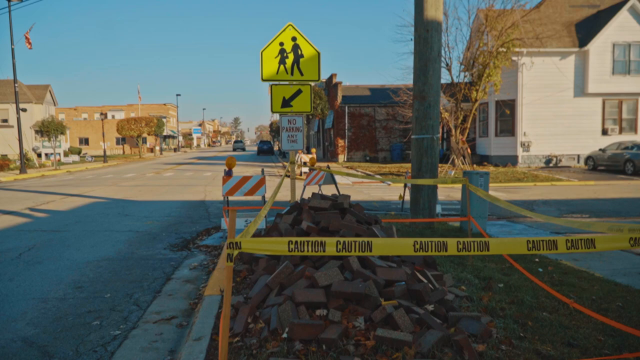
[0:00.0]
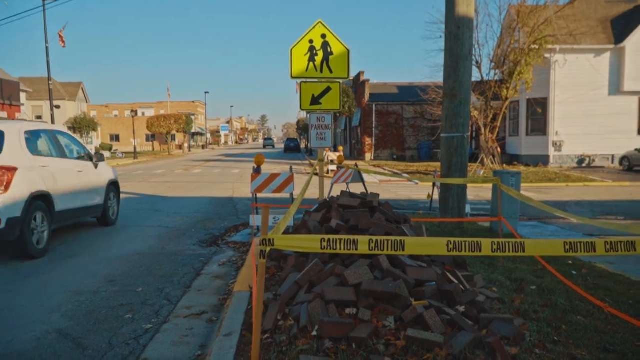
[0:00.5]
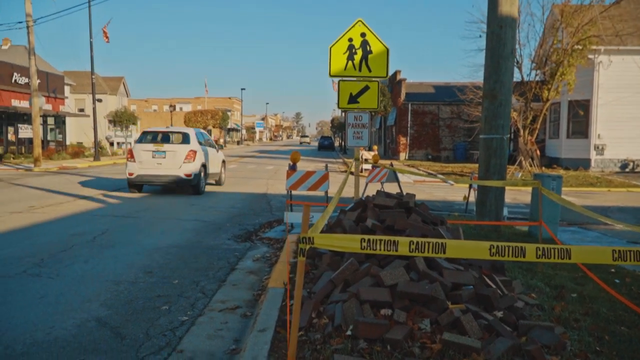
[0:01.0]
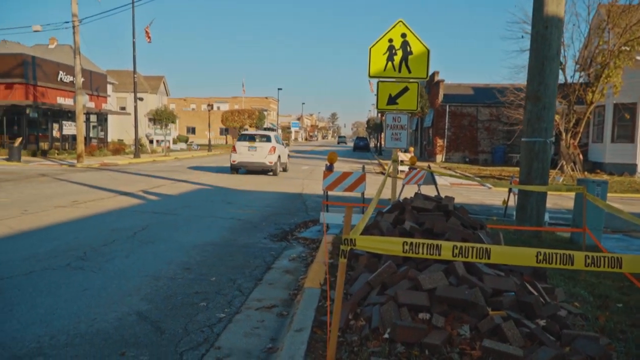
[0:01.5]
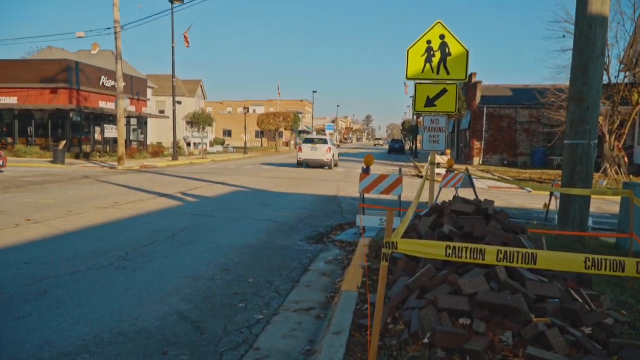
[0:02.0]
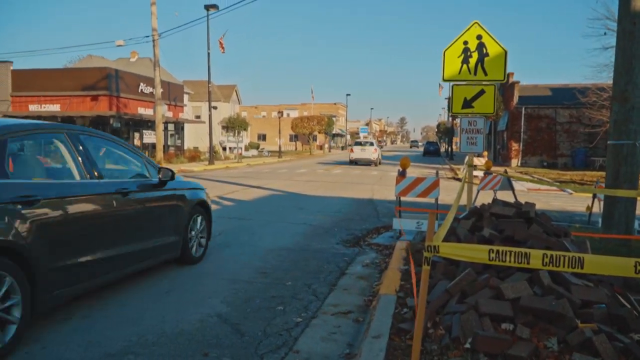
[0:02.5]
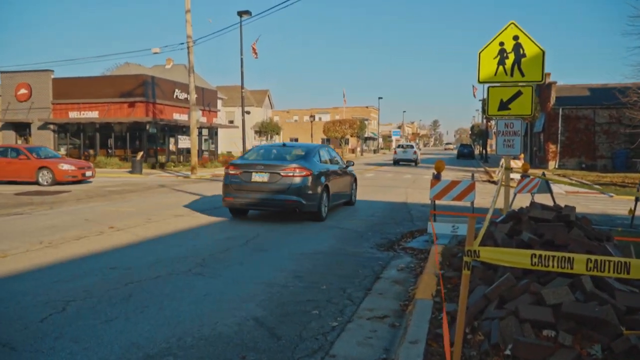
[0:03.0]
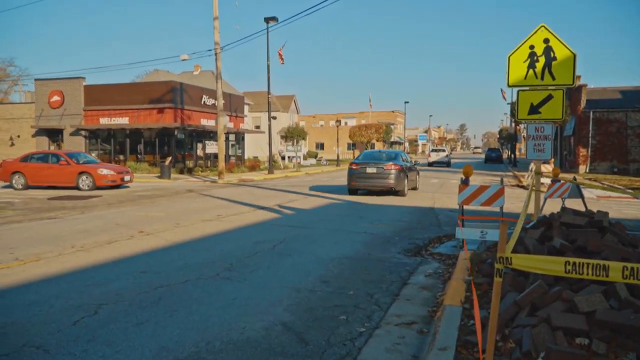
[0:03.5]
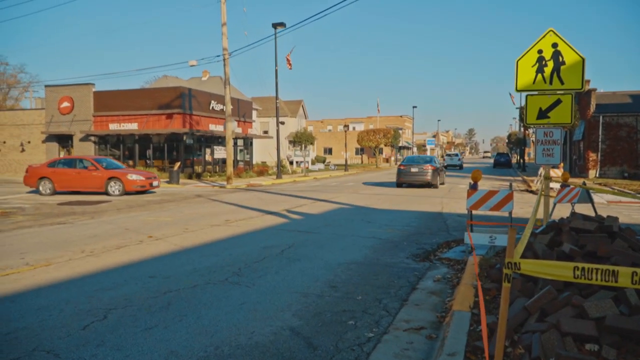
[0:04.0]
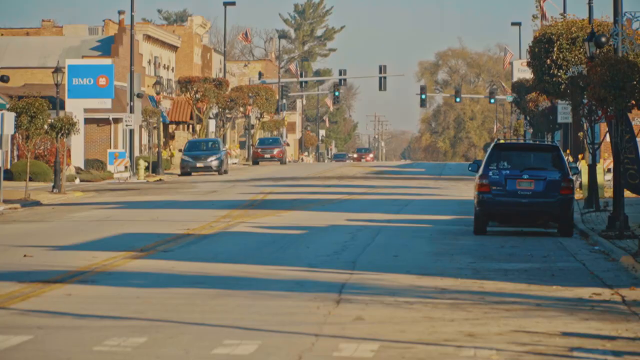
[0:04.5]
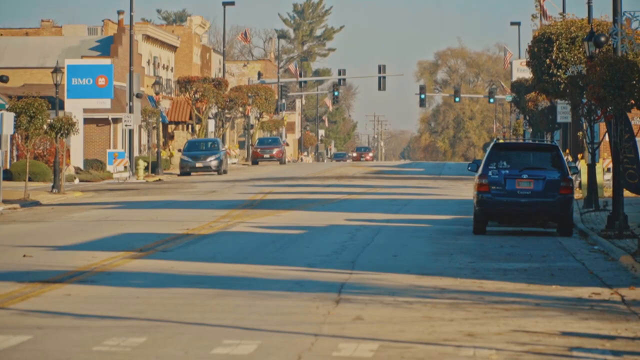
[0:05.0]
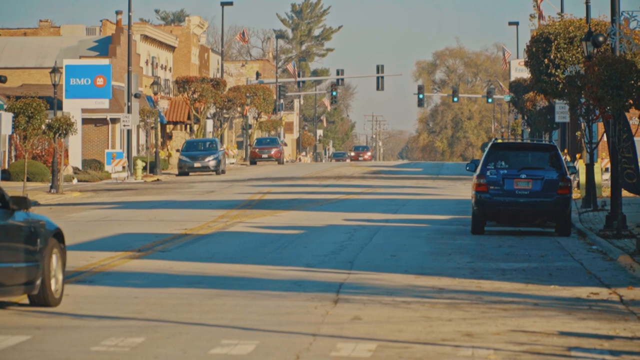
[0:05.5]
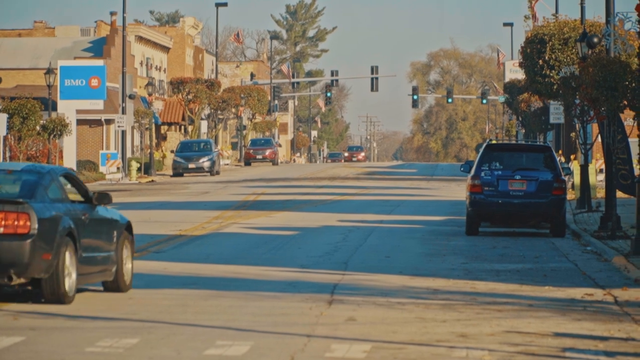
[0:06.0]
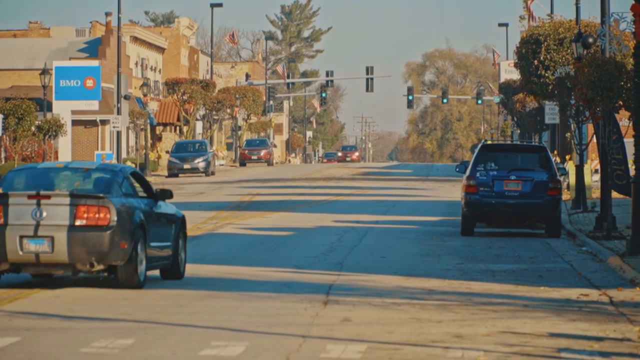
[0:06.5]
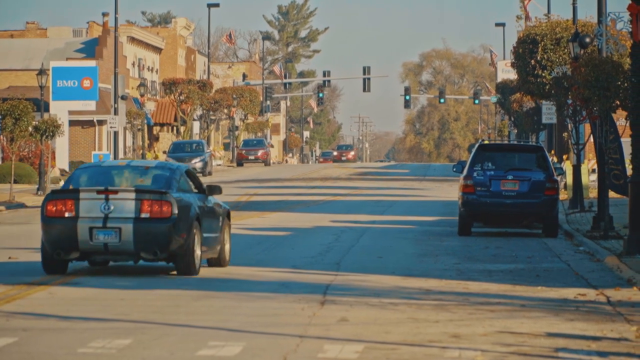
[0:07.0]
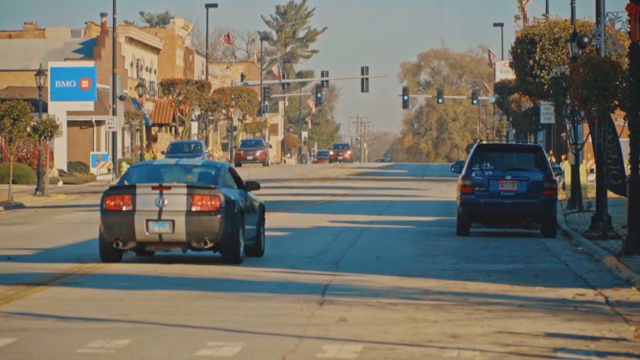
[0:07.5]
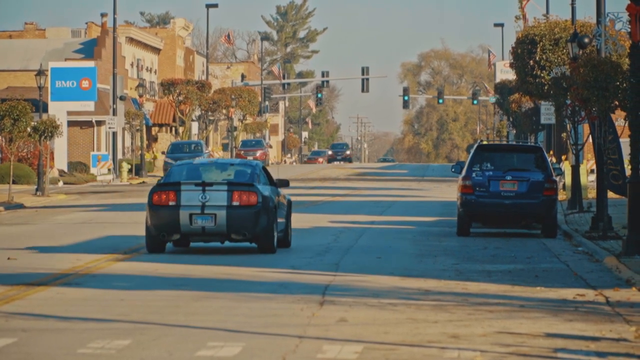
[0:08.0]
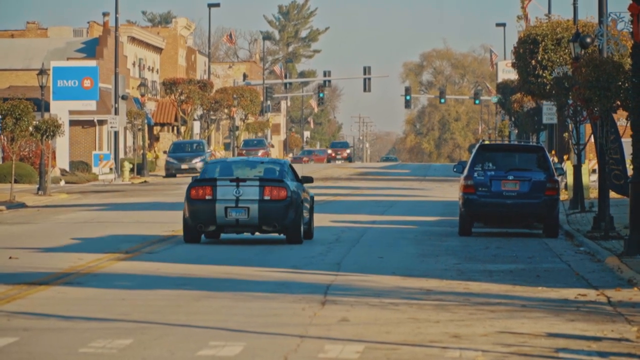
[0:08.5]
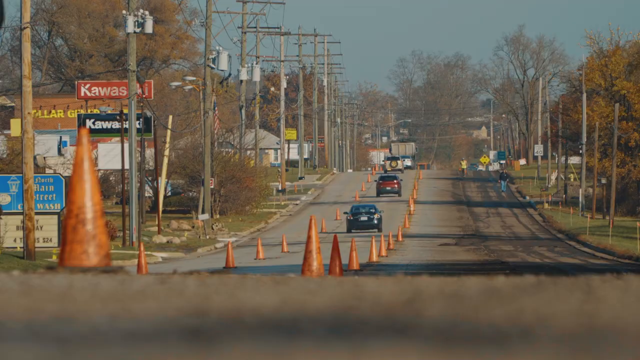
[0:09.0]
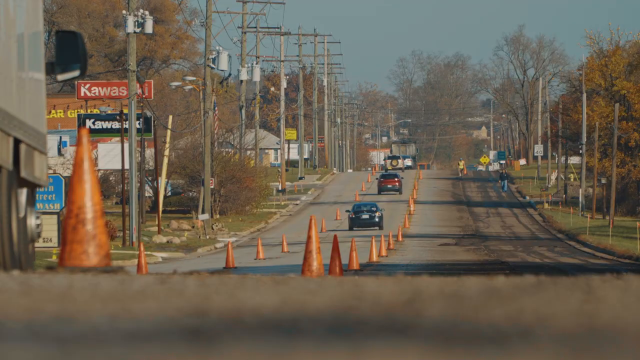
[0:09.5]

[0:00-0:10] A small road runs through a town; it looks to be a parkway of some sort, with houses and businesses on the left and right sides. A pedestrian crossing sign is visible with a no parking sign underneath it, and construction is taking place on the corner of the road. The main building with a visible sign is a Pizza Hut. It is daytime, with a clear blue sky and the sun shining down, and multiple streams of traffic can be seen. The footage spans a couple of different shots showing different parts of the road and town.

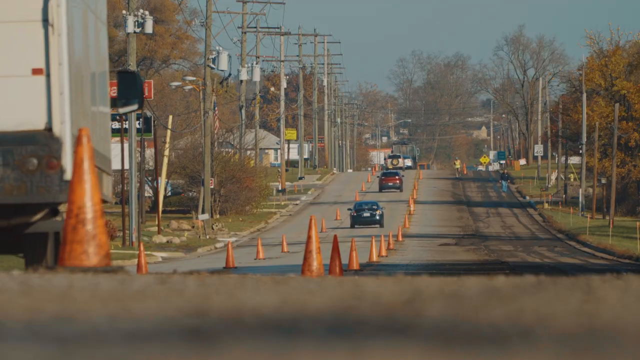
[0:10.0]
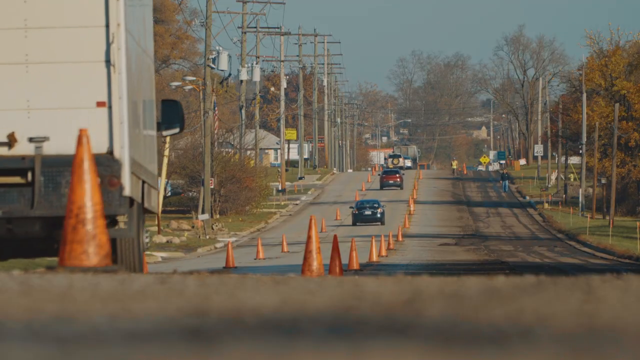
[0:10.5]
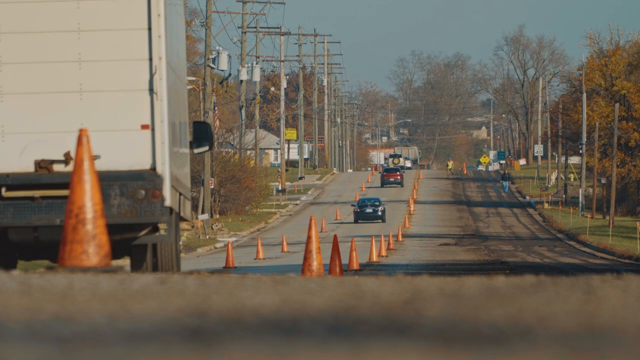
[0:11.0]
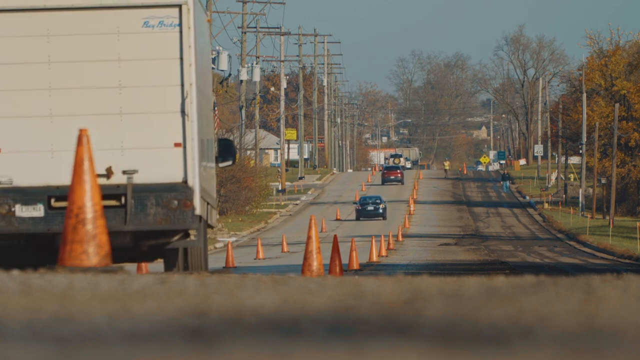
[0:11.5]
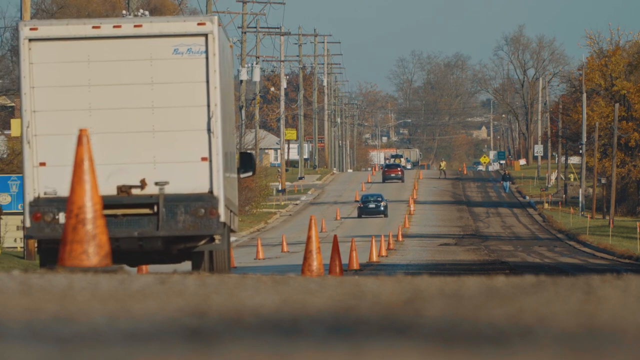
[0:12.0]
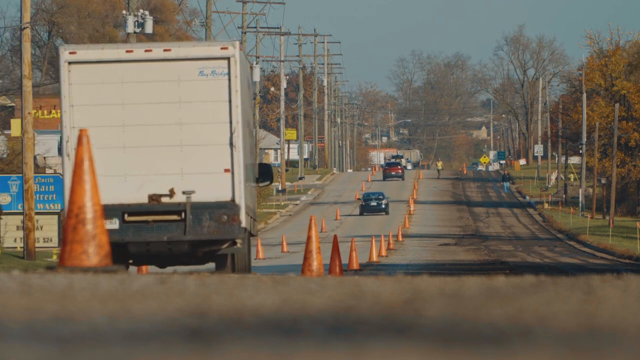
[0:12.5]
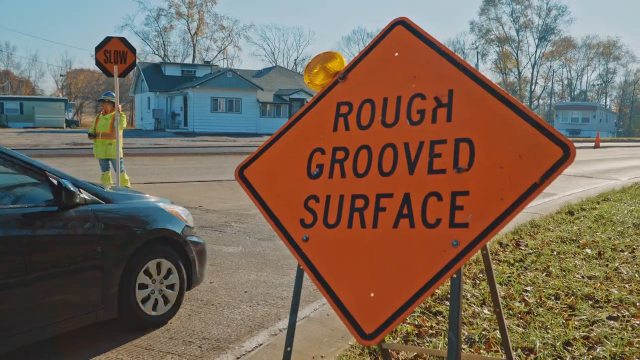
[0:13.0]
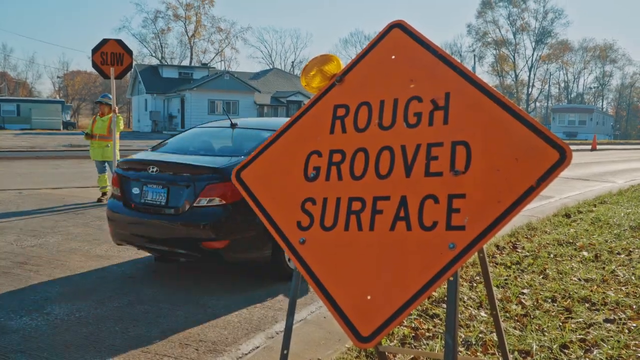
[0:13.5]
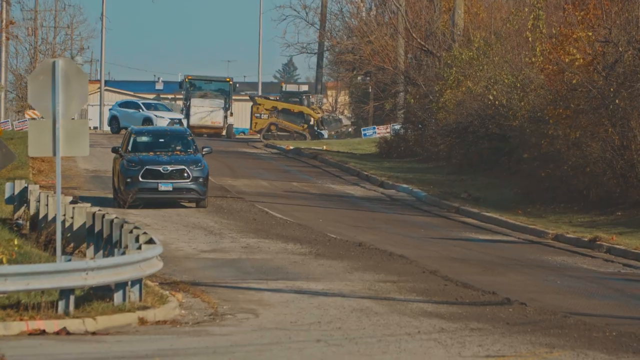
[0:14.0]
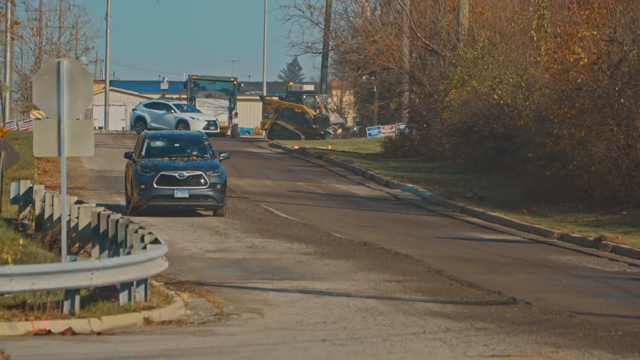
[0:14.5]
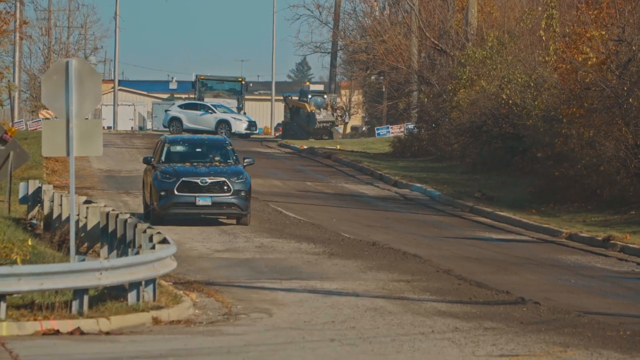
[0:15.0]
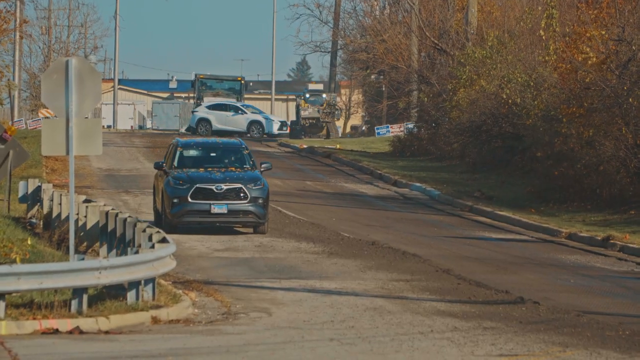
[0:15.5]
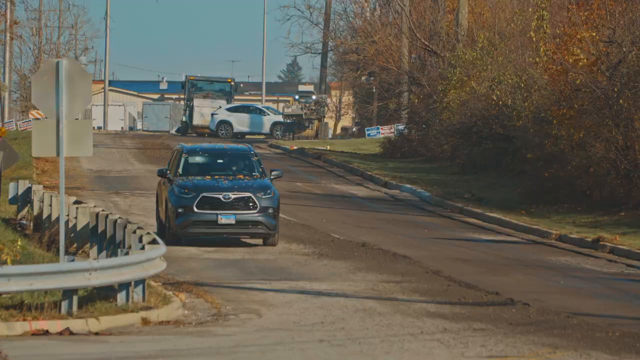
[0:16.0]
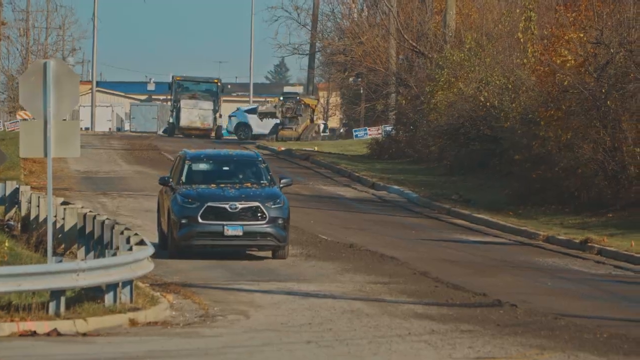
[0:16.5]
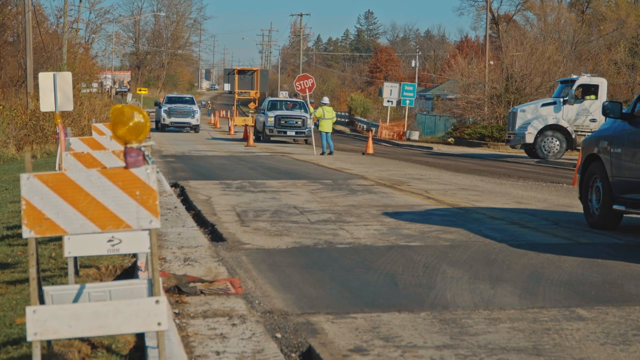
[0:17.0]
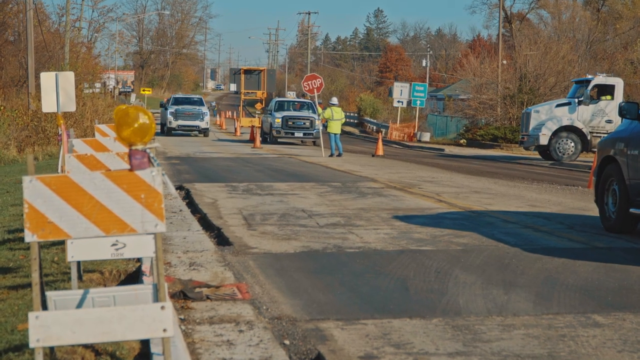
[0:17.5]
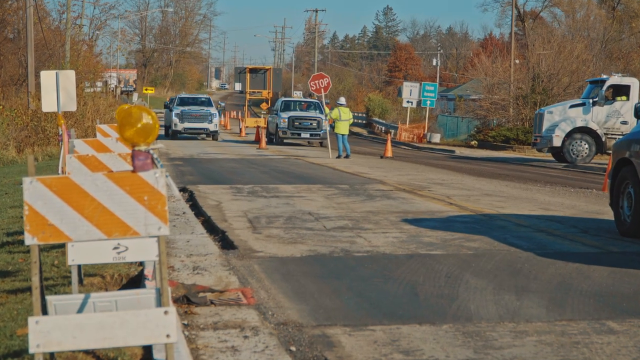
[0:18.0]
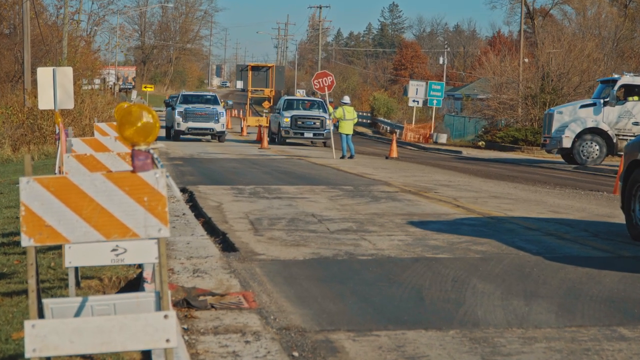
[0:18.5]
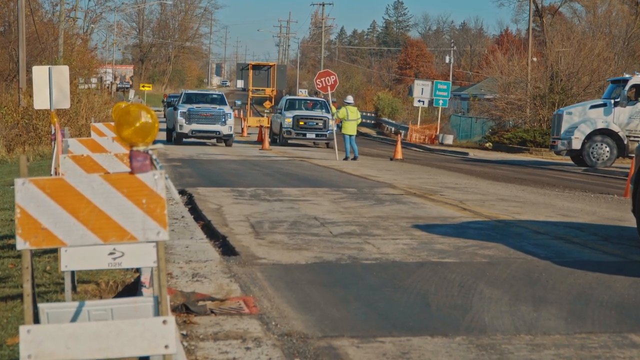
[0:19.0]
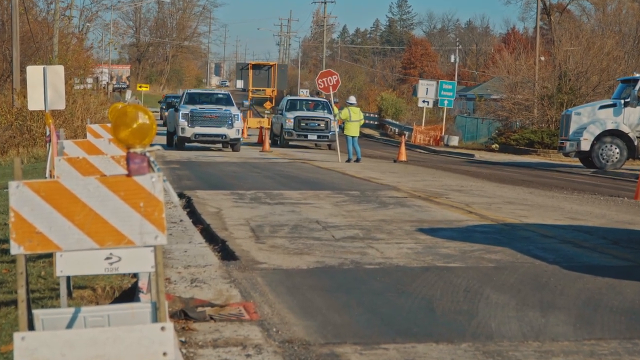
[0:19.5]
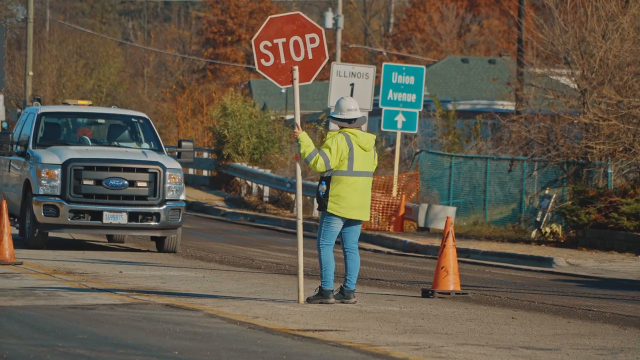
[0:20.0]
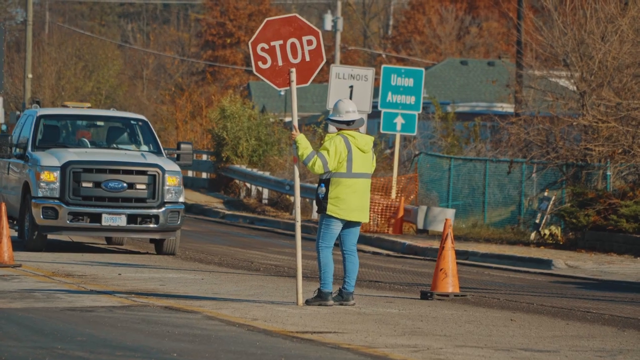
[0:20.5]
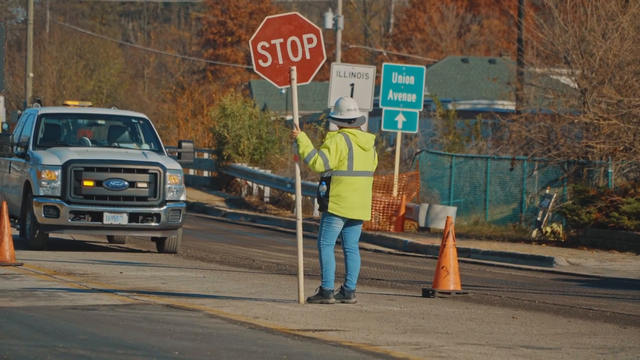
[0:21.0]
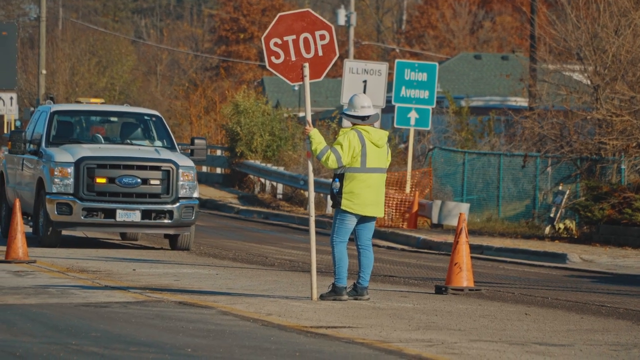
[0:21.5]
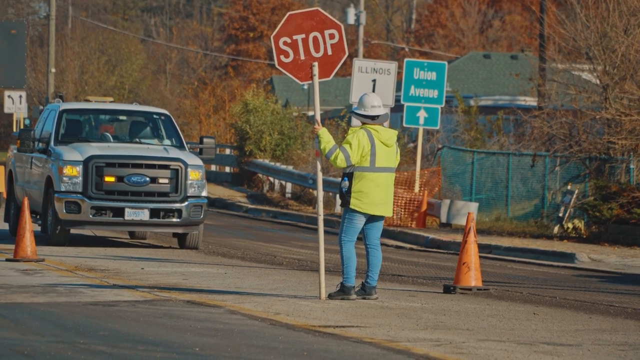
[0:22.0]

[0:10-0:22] A long stretch of road is undergoing construction. The right side of the road has been closed and traffic has been diverted to the left side, with construction cones marking the new lanes. After a scene transition, a diamond-shaped orange construction sign reads "rough grooved surface." A construction worker on the left side directs traffic with a sign. Another transition shows different angles of the construction, with a second construction worker directing traffic using a double-sided sign that says "slow" and "stop." All of these shots are in the daytime.